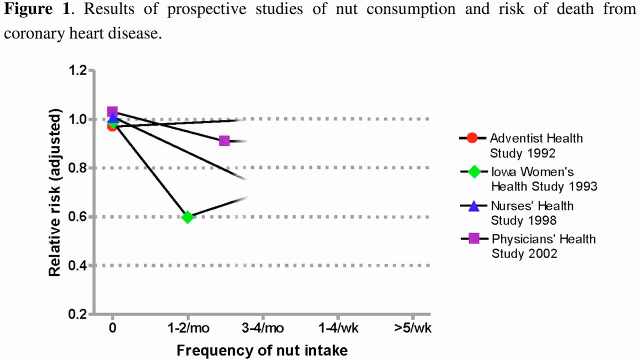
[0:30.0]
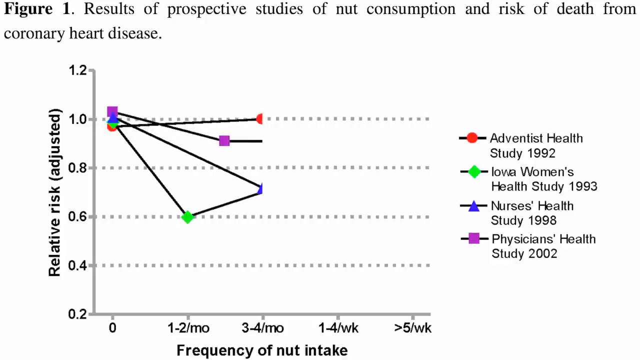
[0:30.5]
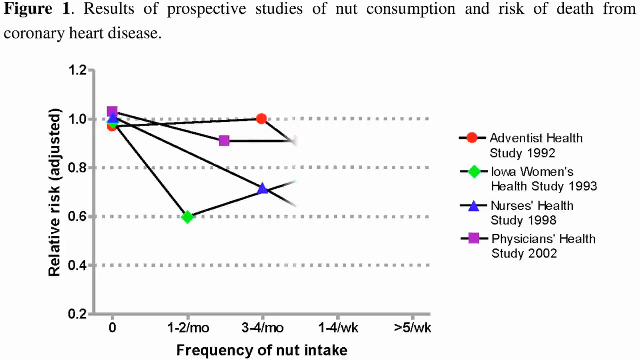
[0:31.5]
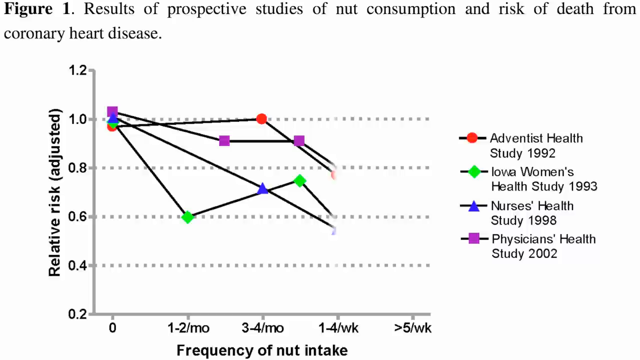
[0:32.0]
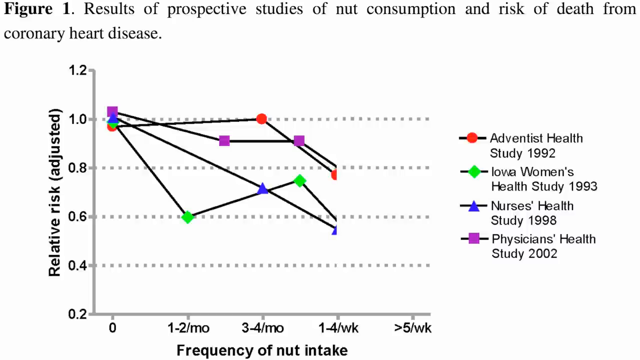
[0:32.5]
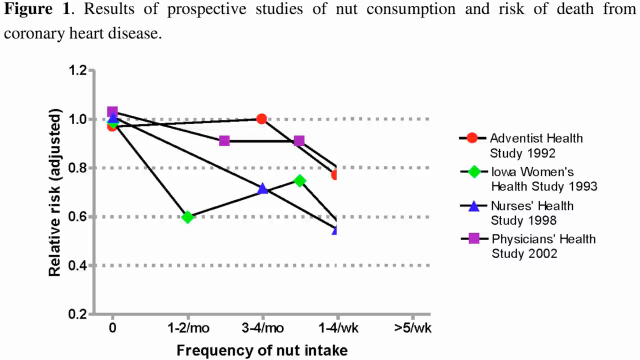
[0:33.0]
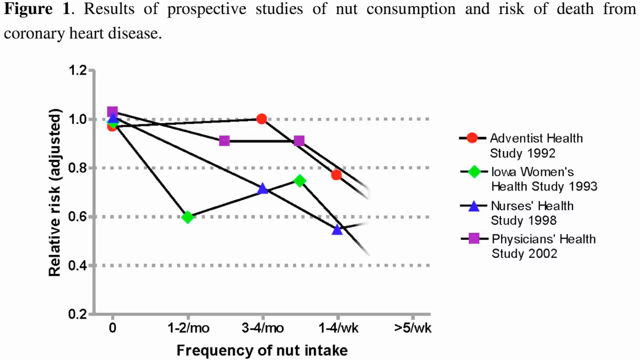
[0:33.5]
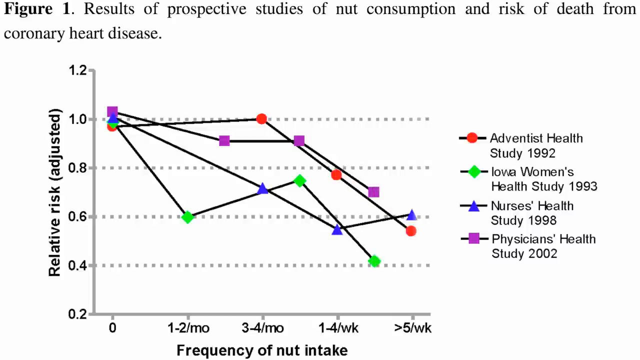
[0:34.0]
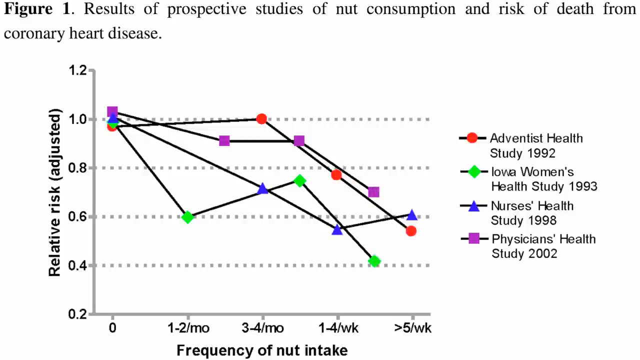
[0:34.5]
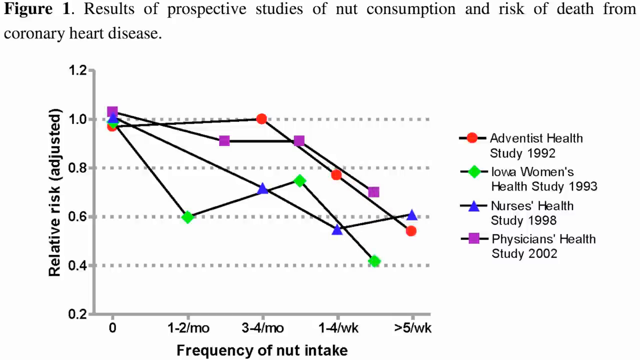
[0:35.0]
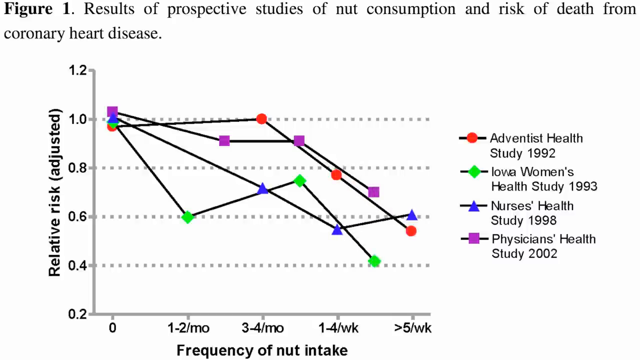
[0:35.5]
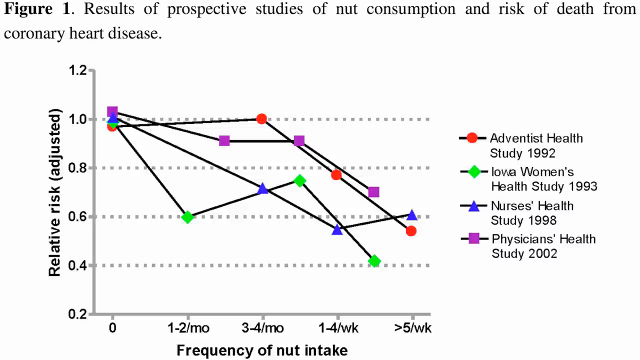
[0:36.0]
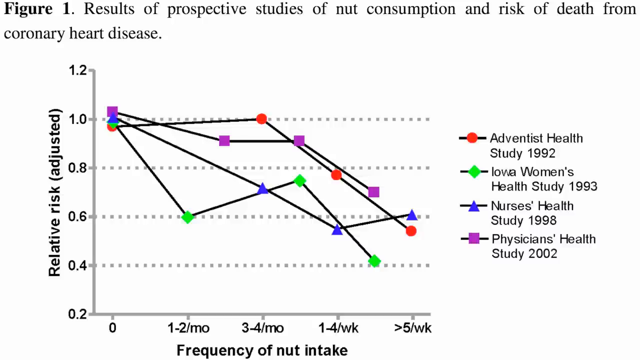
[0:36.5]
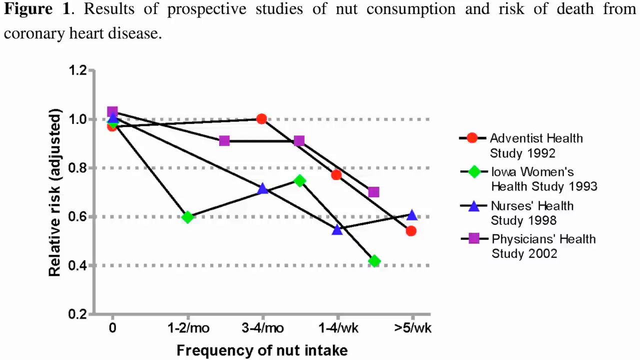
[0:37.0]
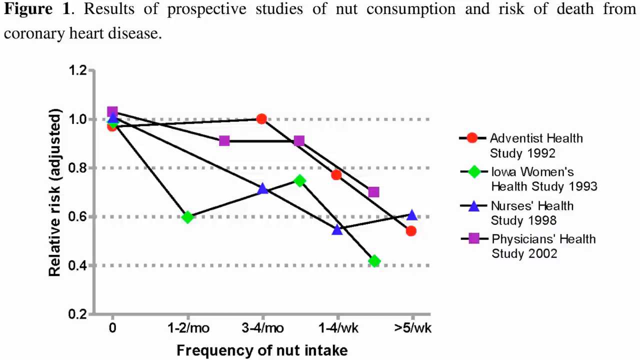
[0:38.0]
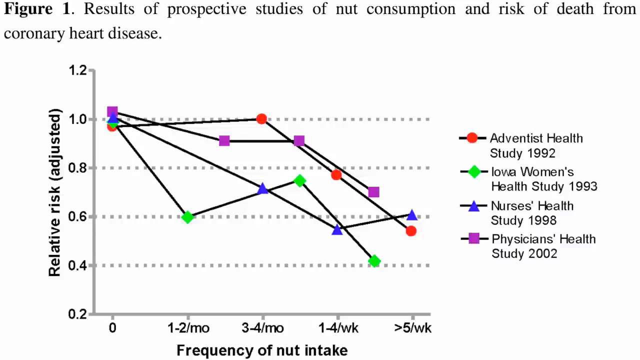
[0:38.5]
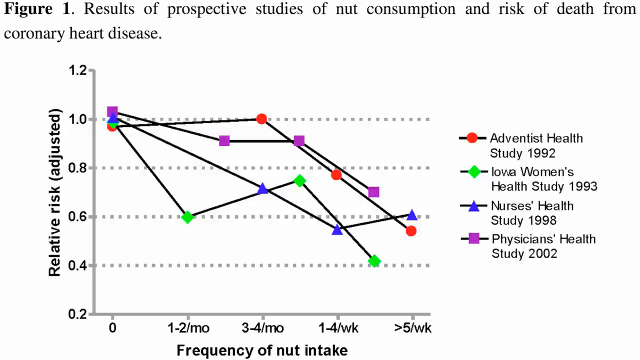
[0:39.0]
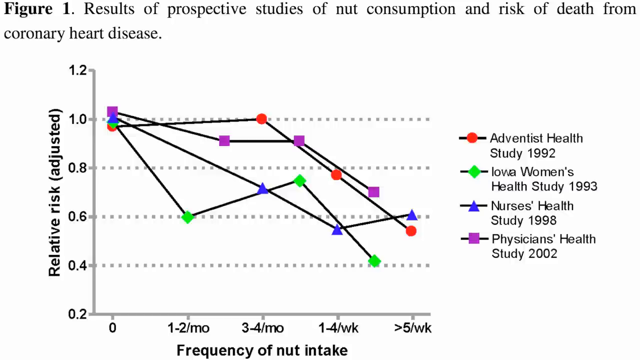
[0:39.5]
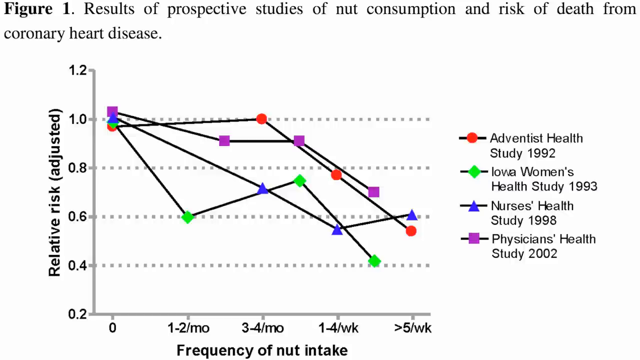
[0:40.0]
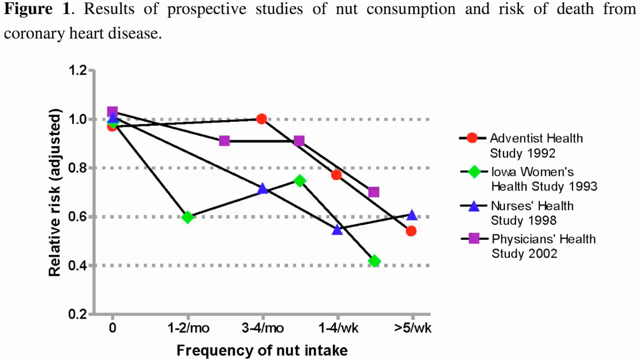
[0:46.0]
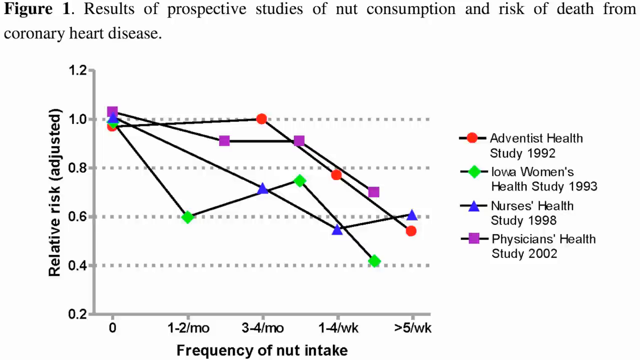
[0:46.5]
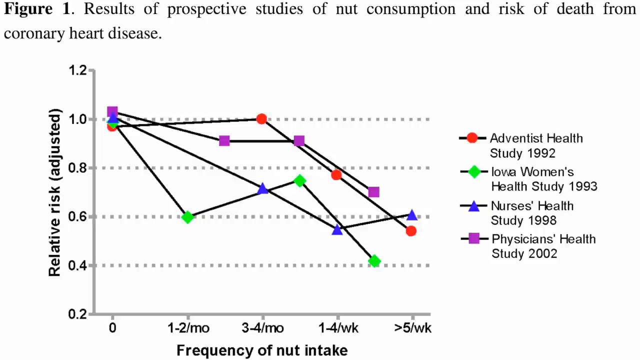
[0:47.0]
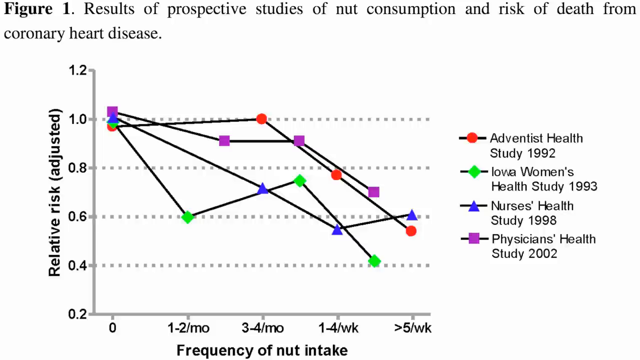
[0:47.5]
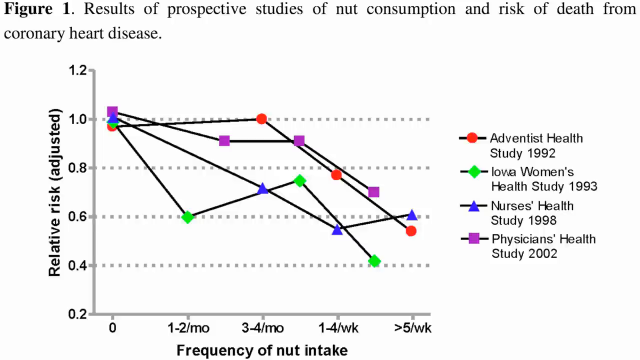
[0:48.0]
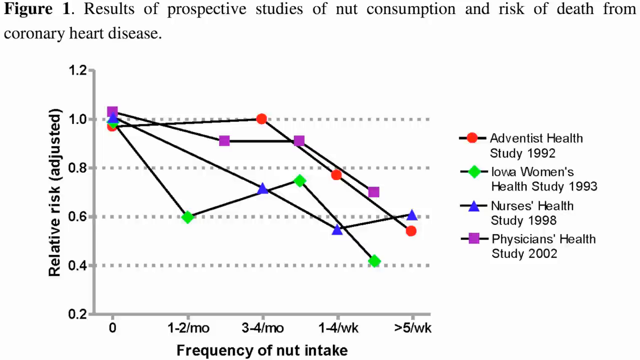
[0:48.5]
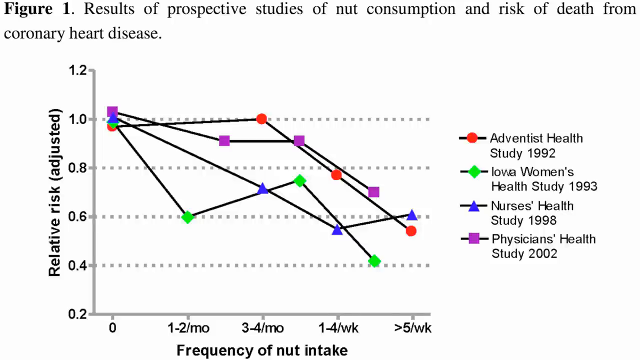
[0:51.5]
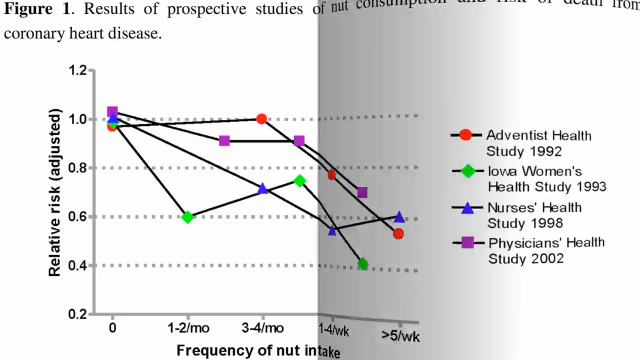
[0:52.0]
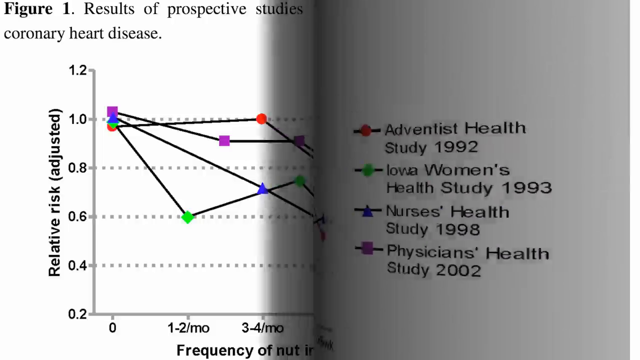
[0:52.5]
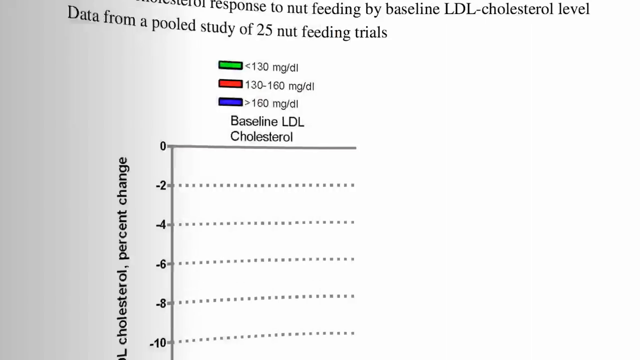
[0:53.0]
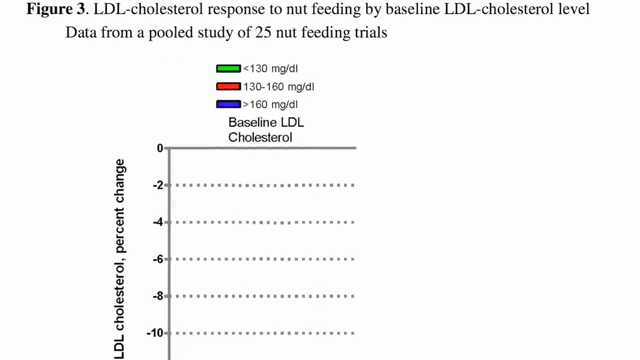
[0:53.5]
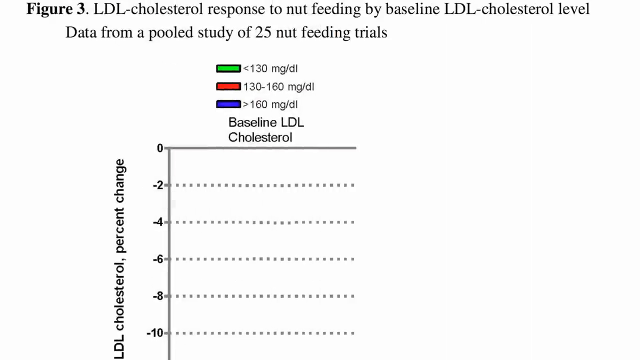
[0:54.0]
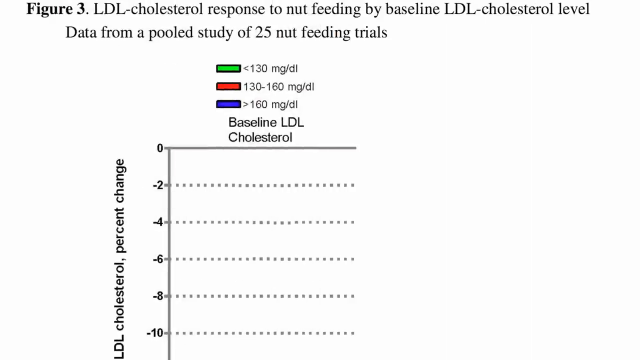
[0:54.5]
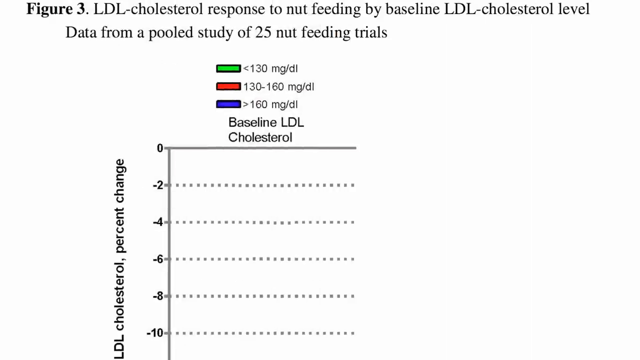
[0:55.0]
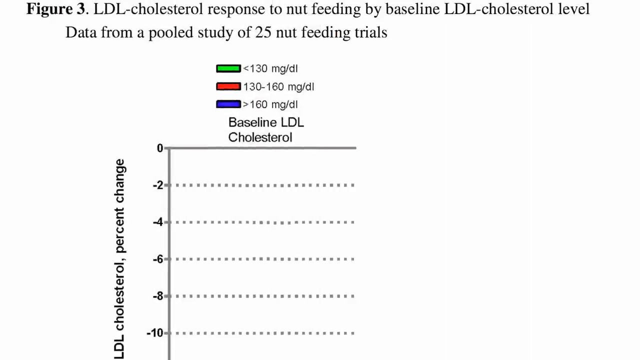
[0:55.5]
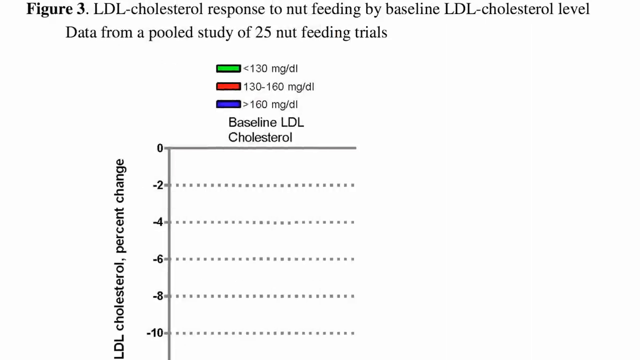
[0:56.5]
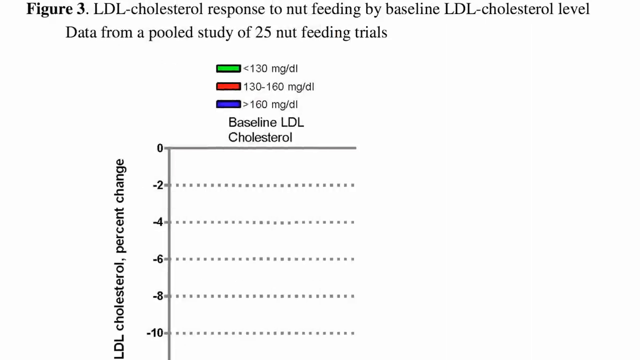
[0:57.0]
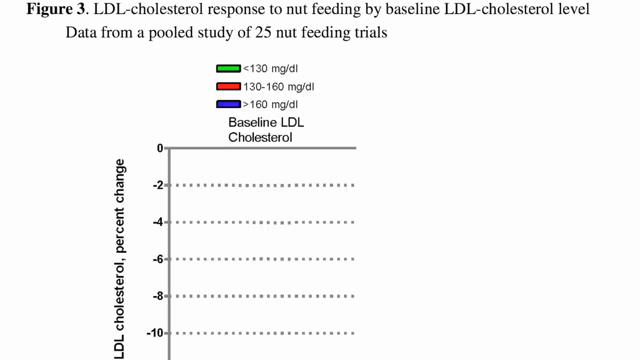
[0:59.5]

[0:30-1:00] Lines for the four studies appear on the same graph, each marked with a different color: a red circle for the first, a green square for the second, a blue diamond for the third and a purple square for the fourth. The graph shows the risks against the frequency of nut intake for the four health studies as separate lines. The view then changes to figure three, a different graph titled "baseline LDL cholesterol," which uses three rectangles of different colors to denote different sizes. The left-hand side of the graph reads "LDL cholesterol percentage change," with numbers on the left side of the graph starting at 0 and going down to 10.